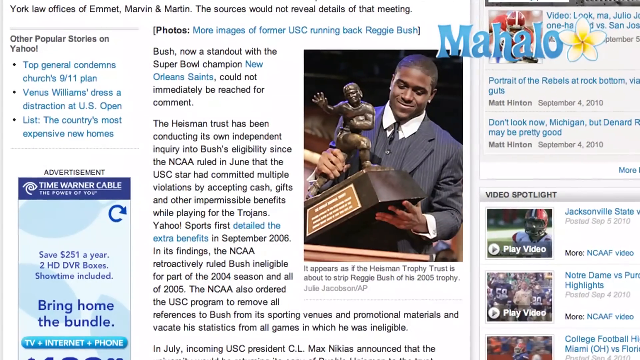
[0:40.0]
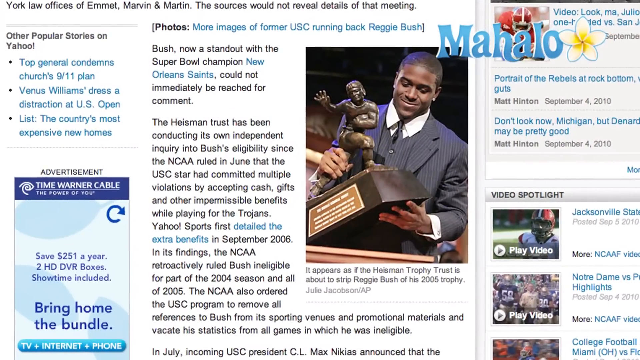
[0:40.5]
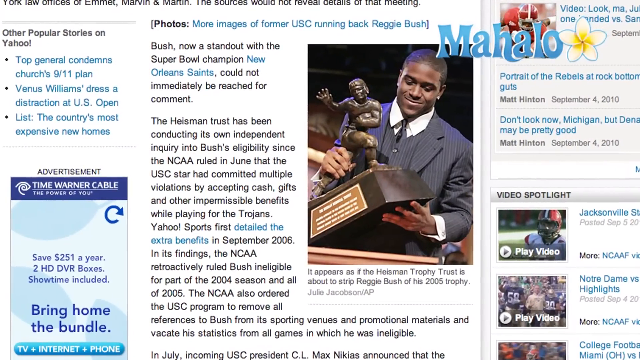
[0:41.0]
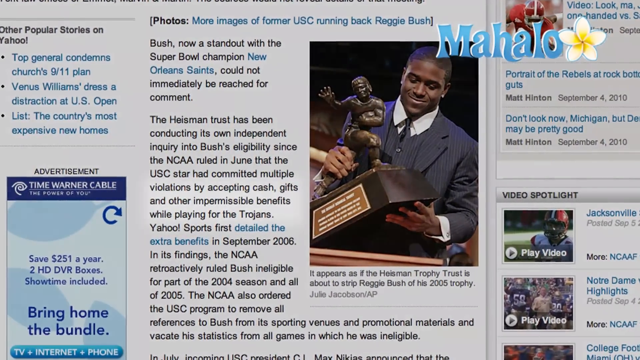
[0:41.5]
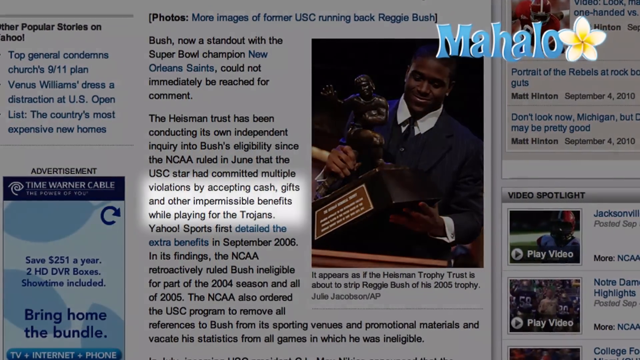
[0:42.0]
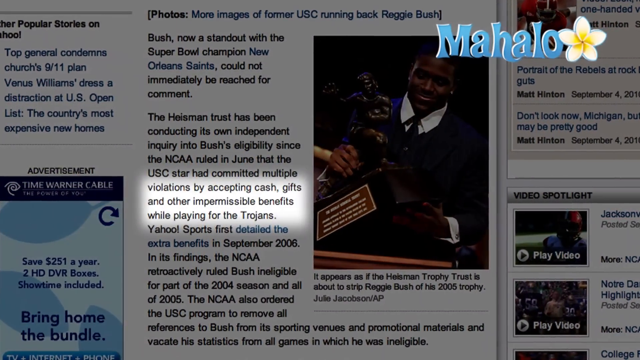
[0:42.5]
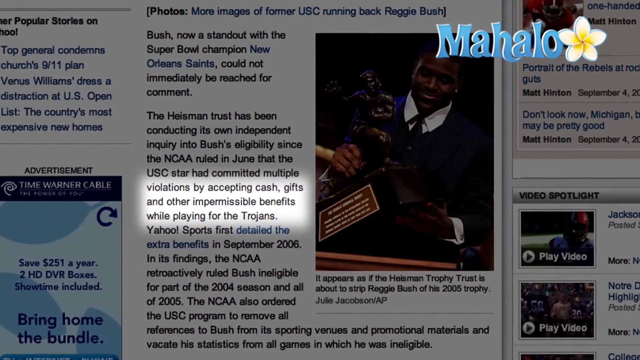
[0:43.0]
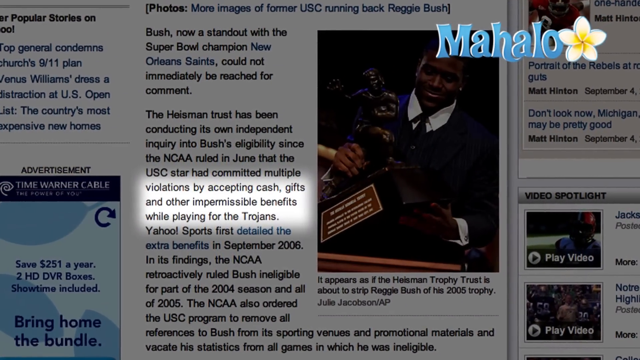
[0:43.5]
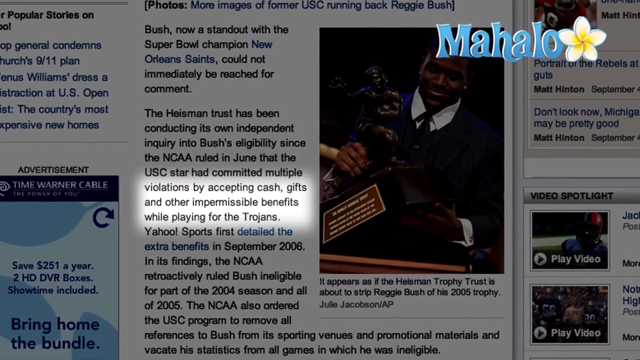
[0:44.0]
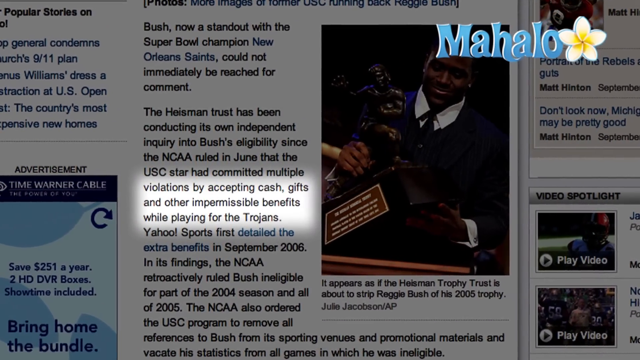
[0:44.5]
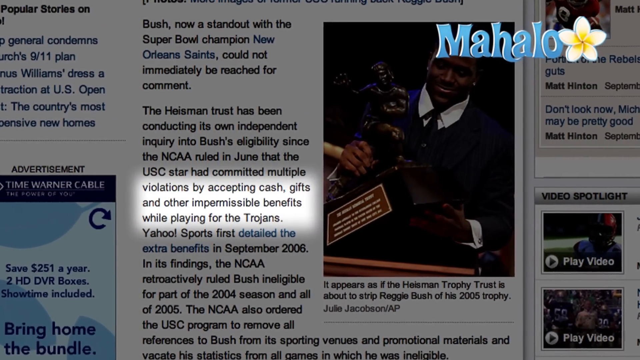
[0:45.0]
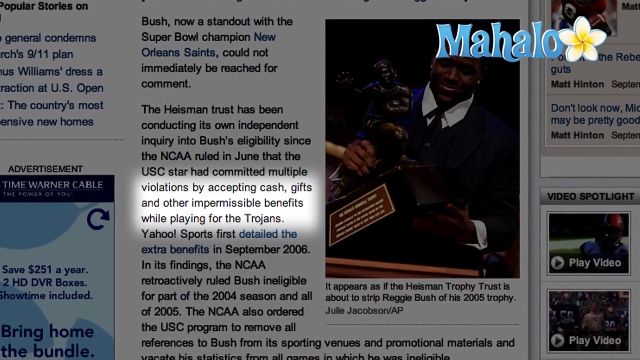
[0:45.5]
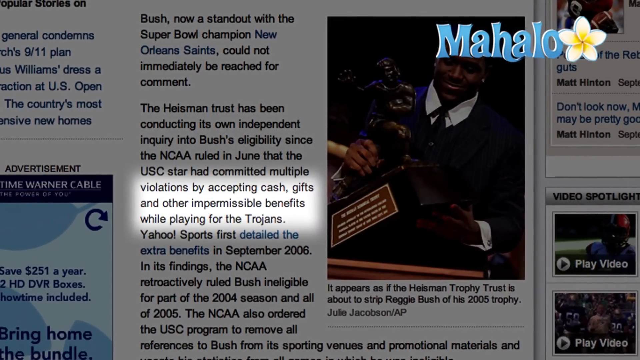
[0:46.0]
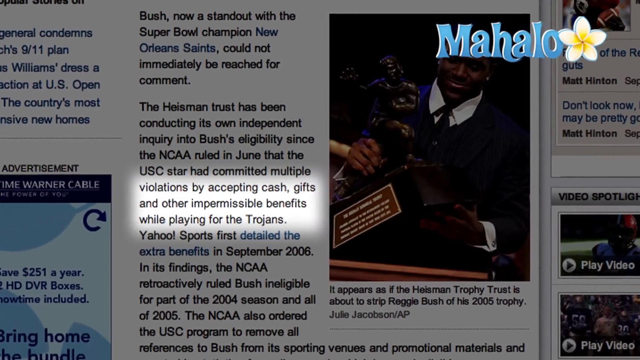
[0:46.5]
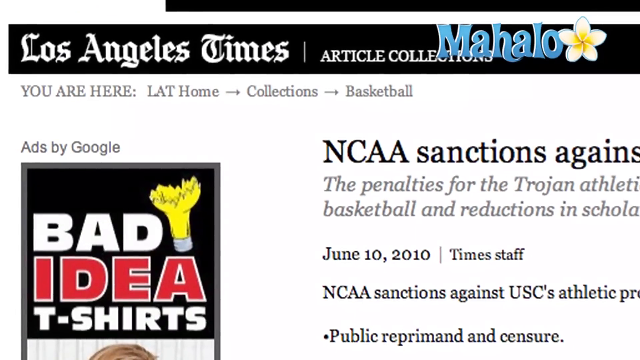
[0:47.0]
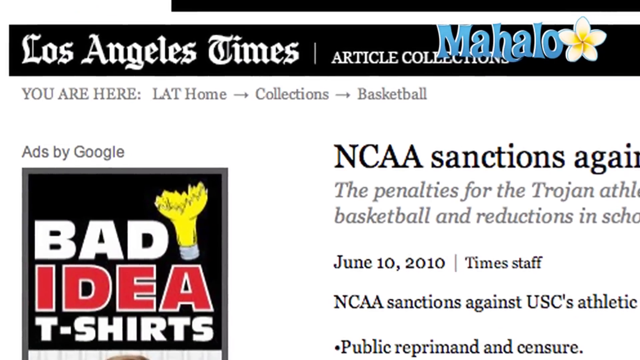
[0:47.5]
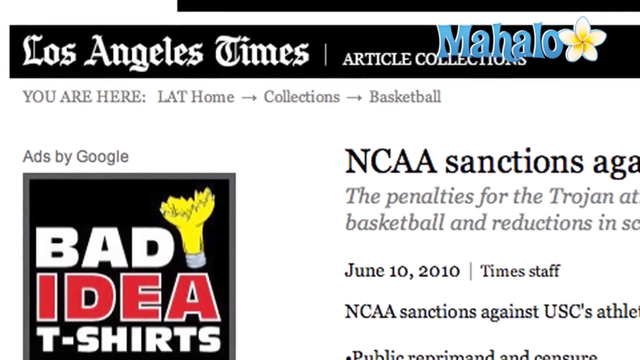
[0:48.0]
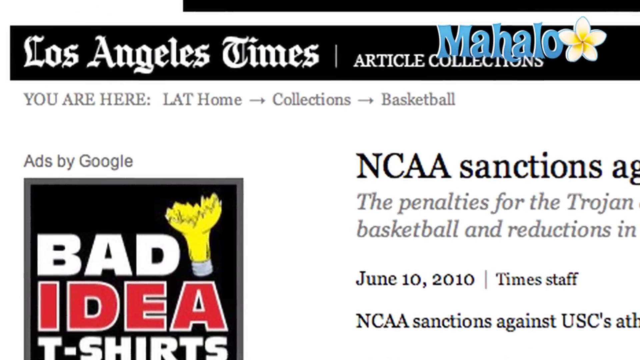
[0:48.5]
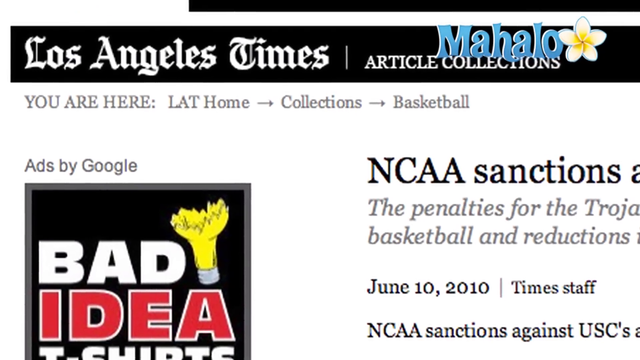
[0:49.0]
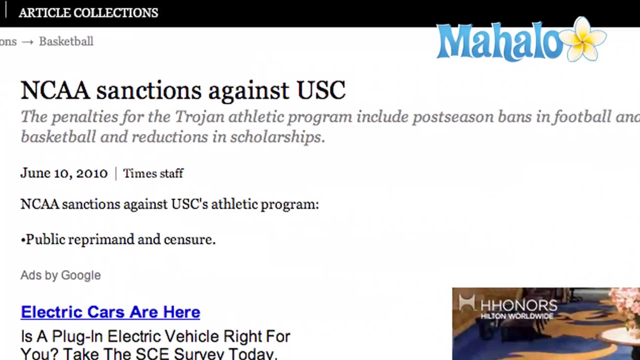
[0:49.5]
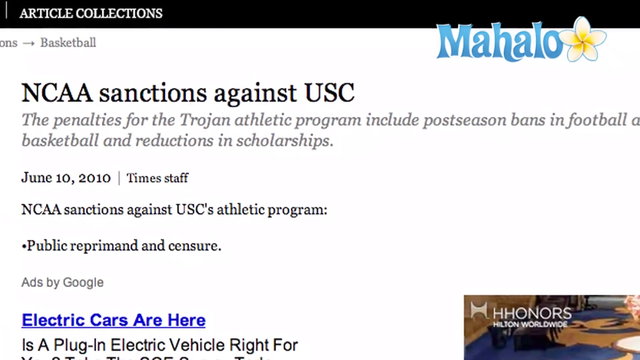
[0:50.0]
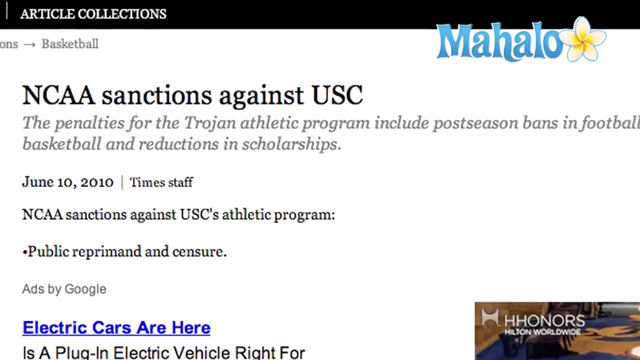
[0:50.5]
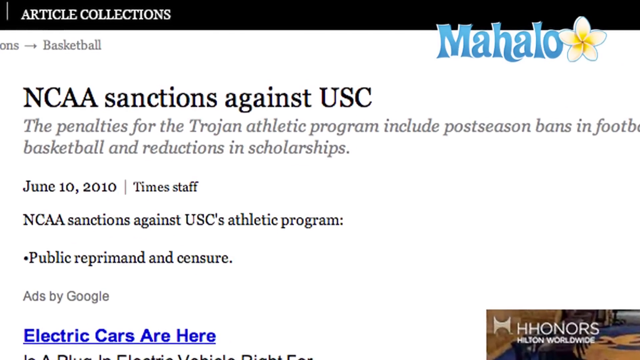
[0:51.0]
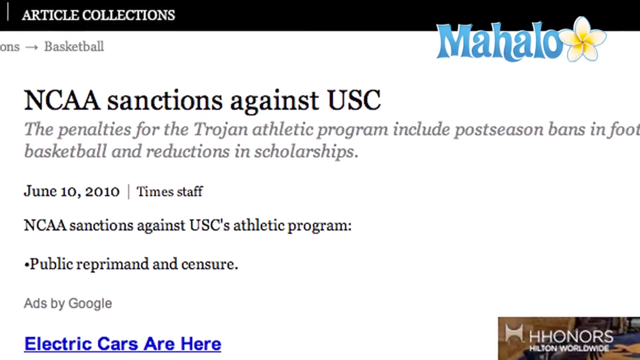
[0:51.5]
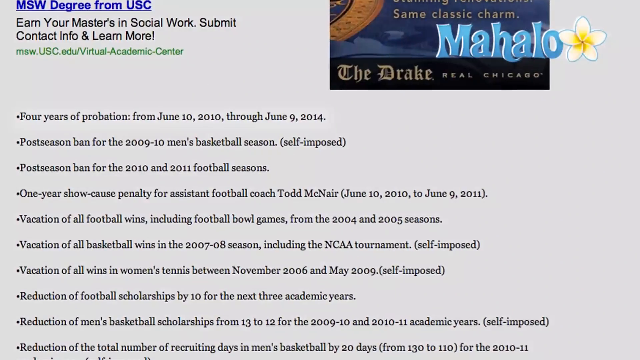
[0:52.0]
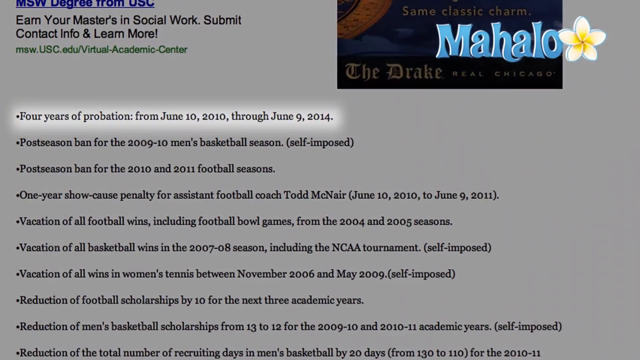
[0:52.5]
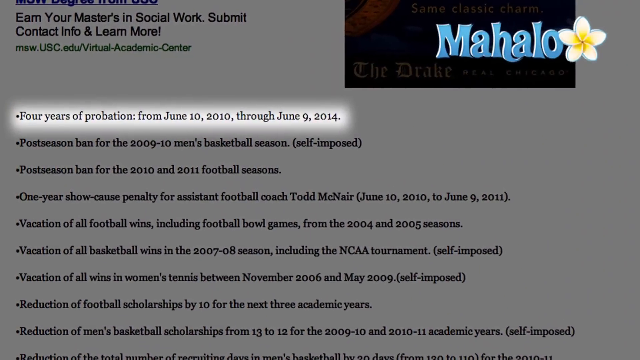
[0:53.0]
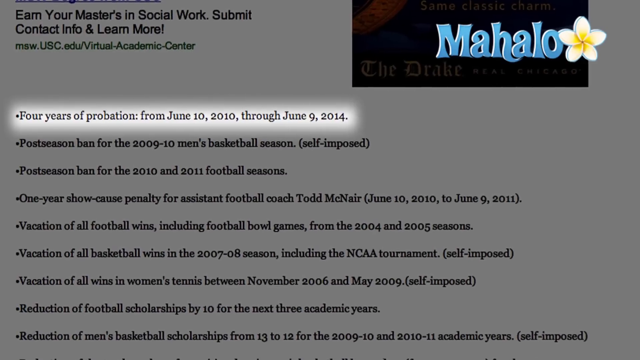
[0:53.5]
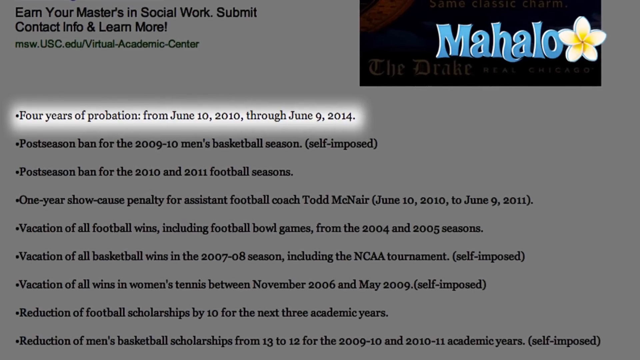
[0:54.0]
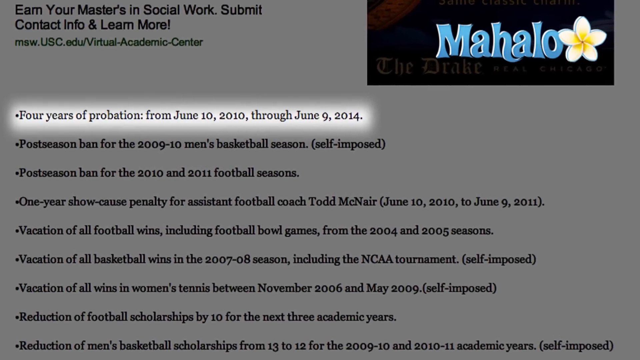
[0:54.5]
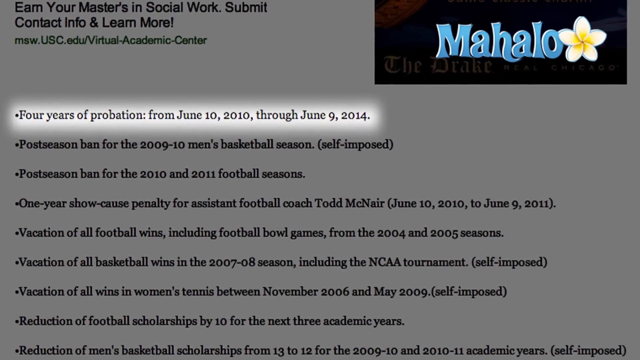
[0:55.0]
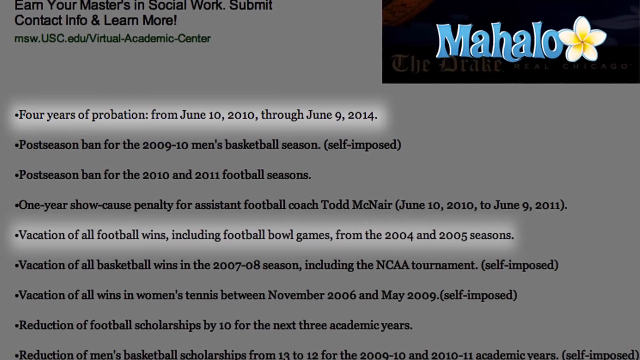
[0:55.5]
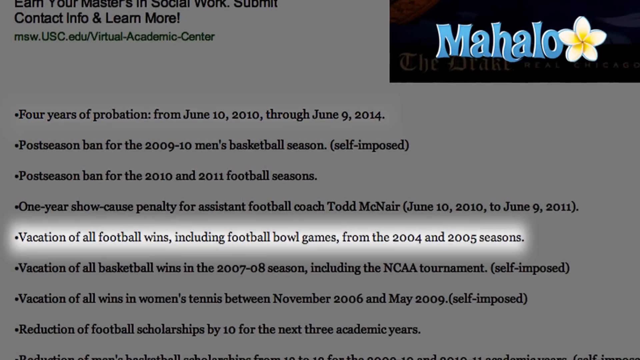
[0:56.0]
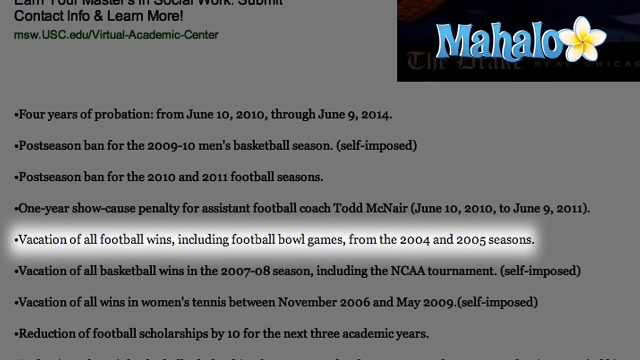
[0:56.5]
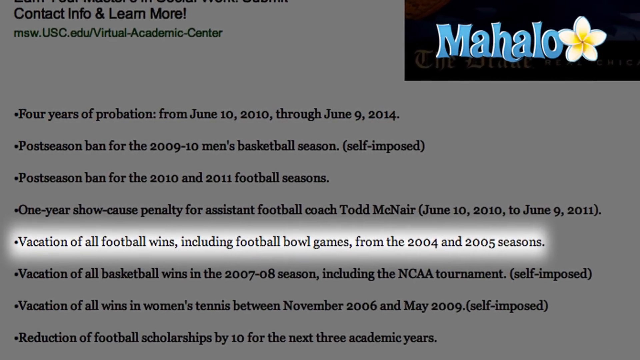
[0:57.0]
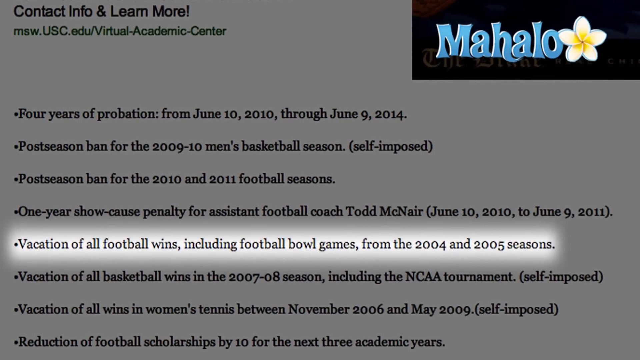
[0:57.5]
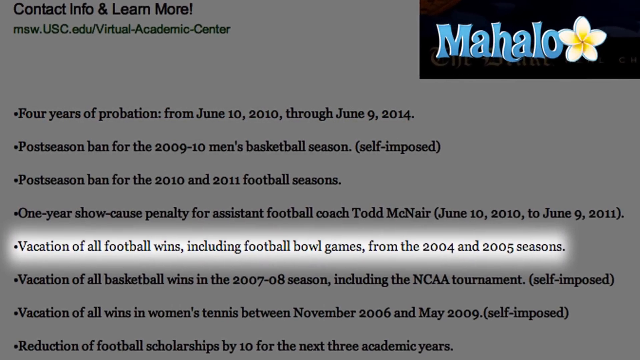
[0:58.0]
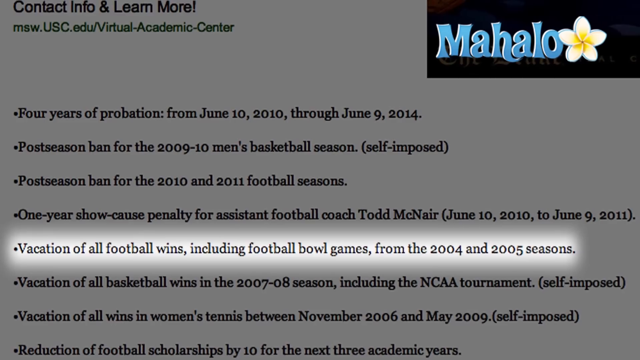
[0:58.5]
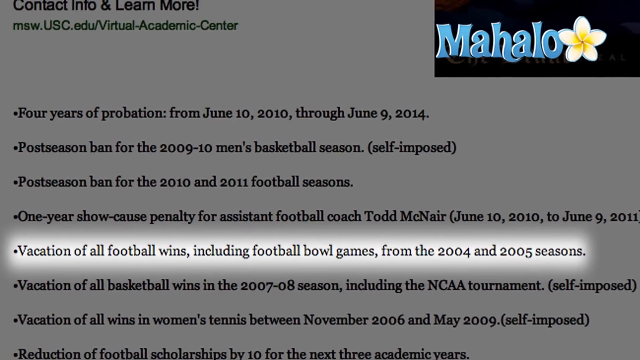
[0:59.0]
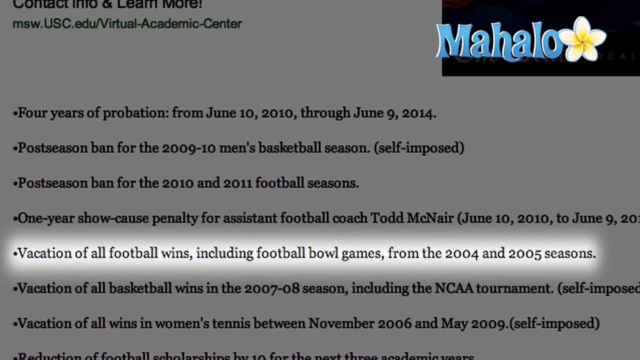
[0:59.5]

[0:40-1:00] The article showing Reggie Bush holding the Heisman is on screen; it appears to be the moment he received the Heisman Trophy. He wears a gray suit with a white shirt, a black tie and a gray vest underneath, and appears to be smiling and happy as he holds the trophy. The view zooms in on a phrase in the article to the left of the picture: "violations by accepting cash, gifts, and other impermissible benefits while playing for the Trojans." The video transitions to another article, more zoomed in, with "Los Angeles Times" in white text in a black banner at the top. It scrolls quickly to another part of the article titled "NCAA sanctions against USC." A new article comes in with a highlighted-in-white passage: "four years of probation from June 10th, 2010 through June 9th, 2014." A few lines down, also highlighted in white, it says "vacation of all football wins including football bowl games from 2004 and 2005 seasons."